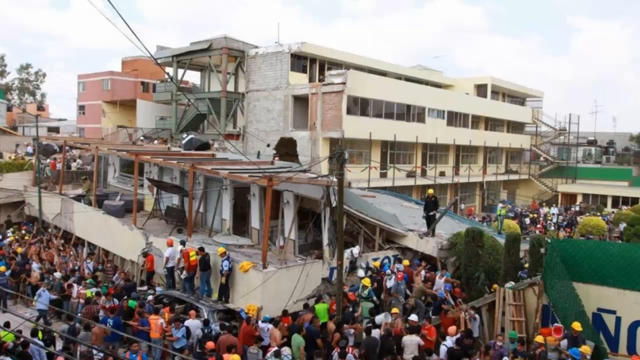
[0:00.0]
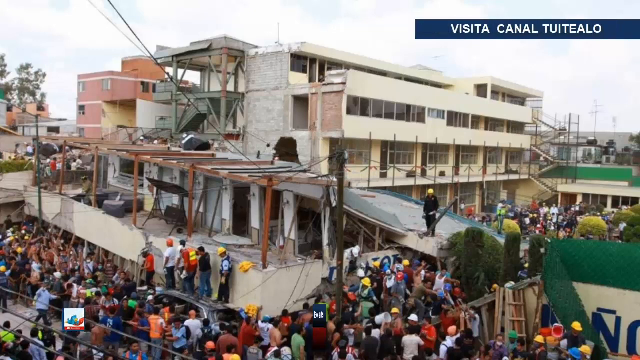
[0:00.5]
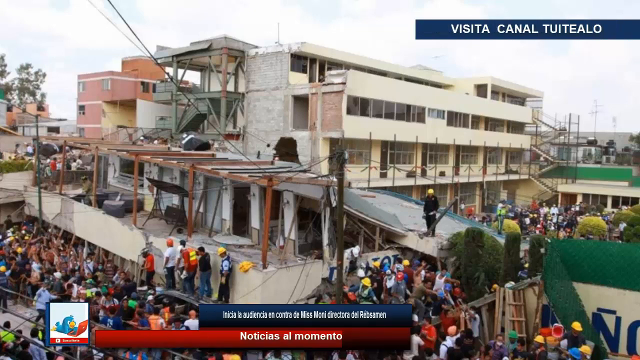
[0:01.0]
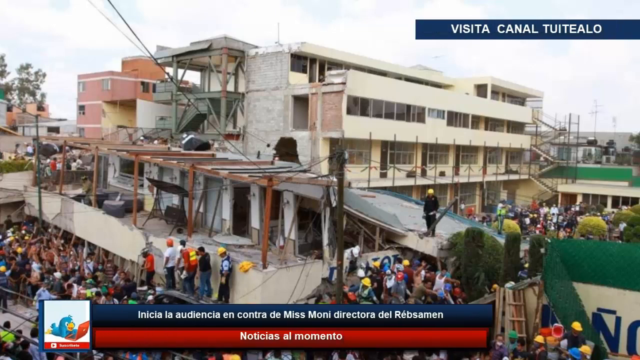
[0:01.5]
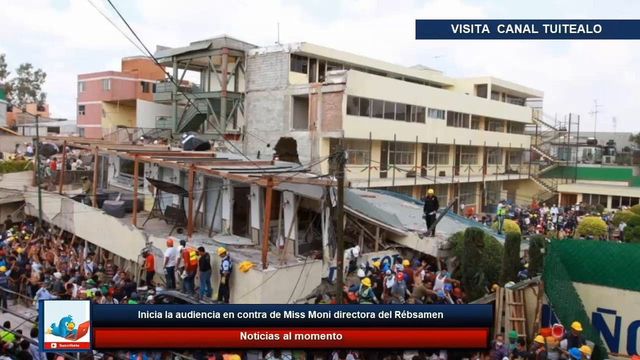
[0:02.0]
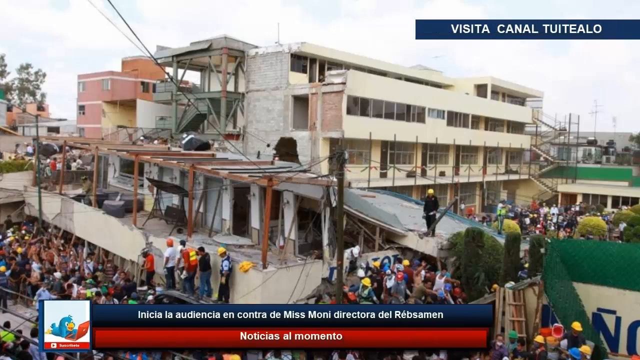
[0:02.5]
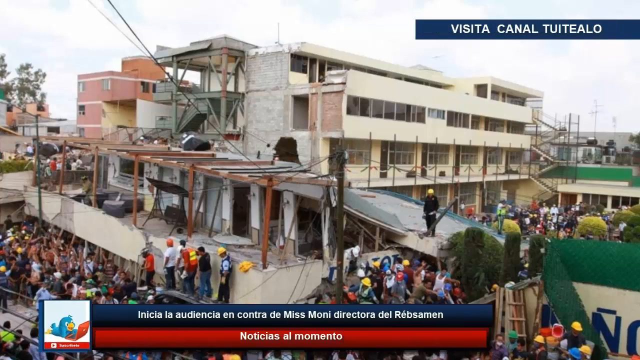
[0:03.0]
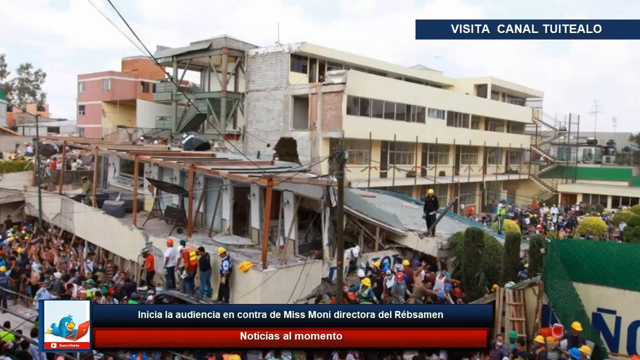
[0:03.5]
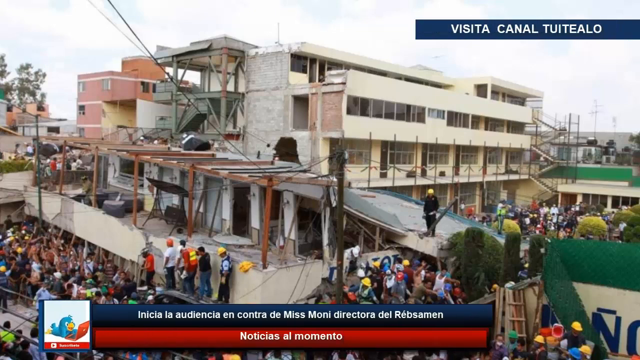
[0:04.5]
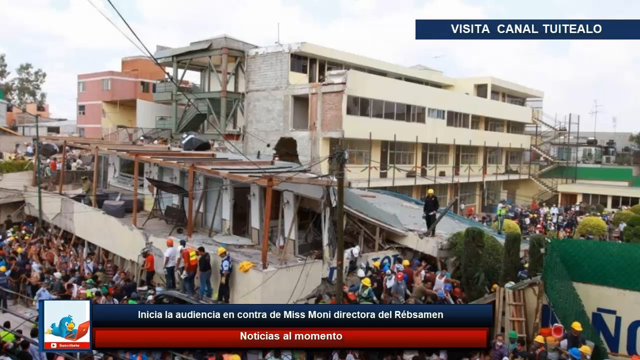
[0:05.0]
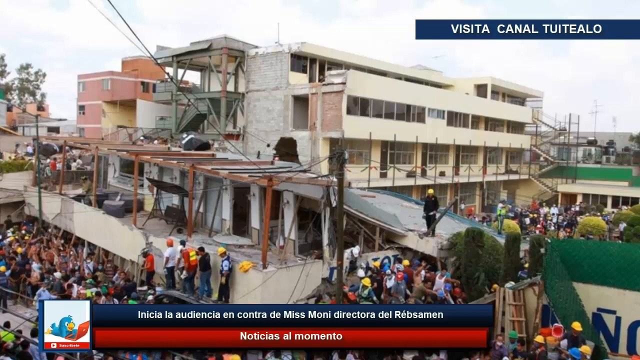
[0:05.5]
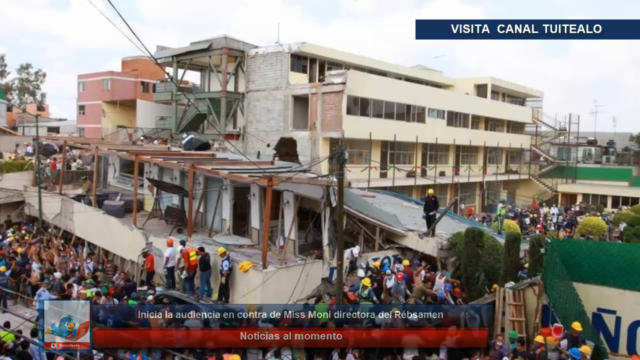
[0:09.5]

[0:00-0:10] A building is surrounded by hundreds of people, so many that they cover all visible sides of the building. Some of them wear yellow and orange construction vests, and the majority of the crowd wears yellow construction hats. Some individuals are standing atop a car. The front part of the building appears dilapidated, while the others behind it appear to be usable. One of the buildings is painted orange, while the other is a light yellow and has a staircase.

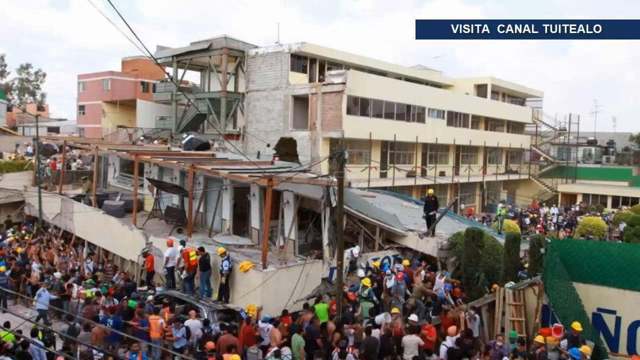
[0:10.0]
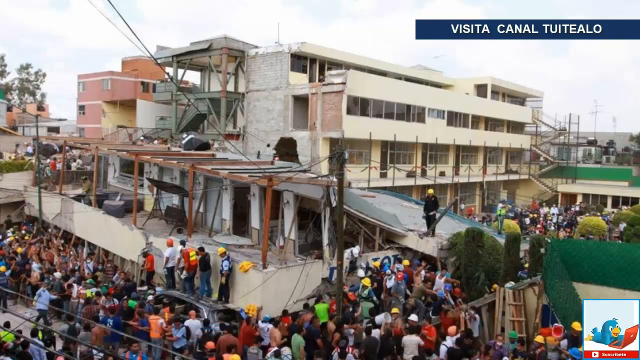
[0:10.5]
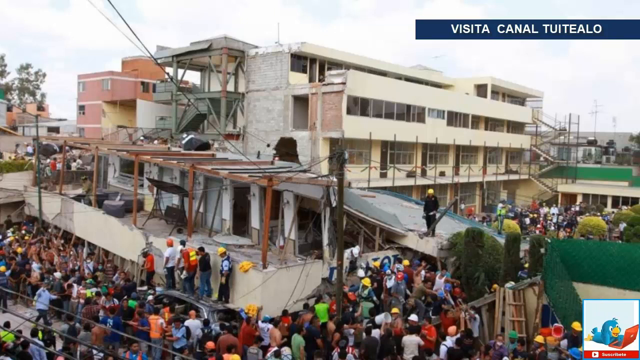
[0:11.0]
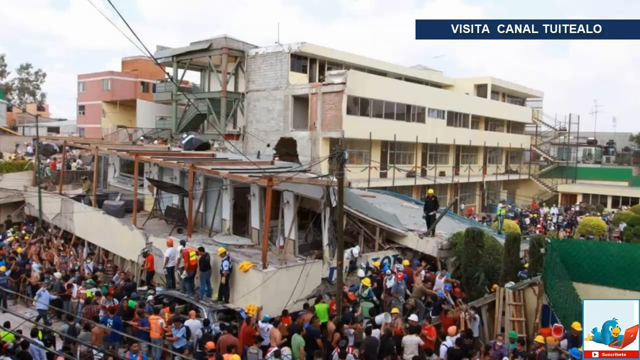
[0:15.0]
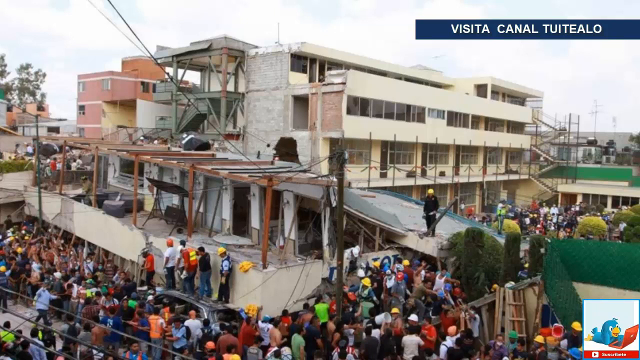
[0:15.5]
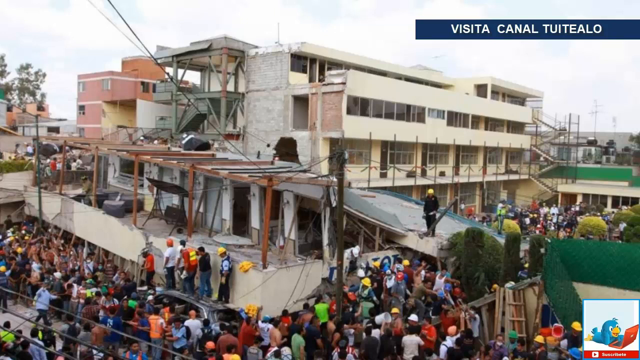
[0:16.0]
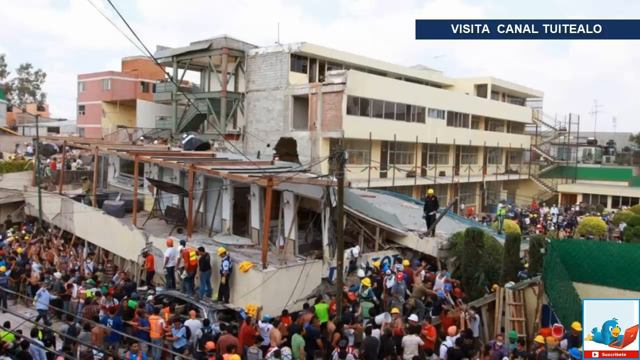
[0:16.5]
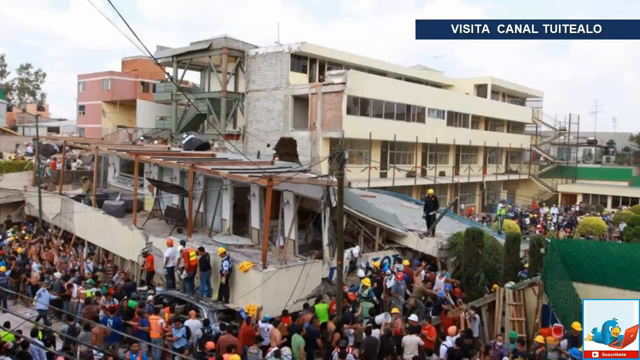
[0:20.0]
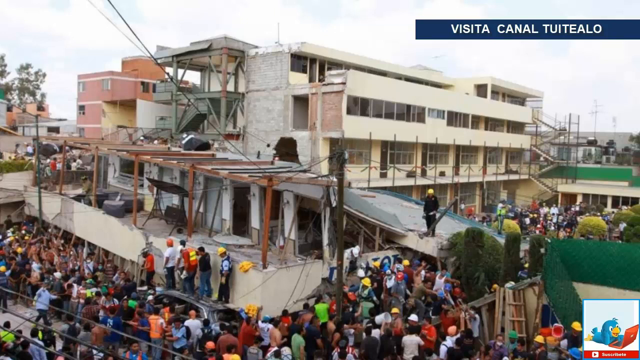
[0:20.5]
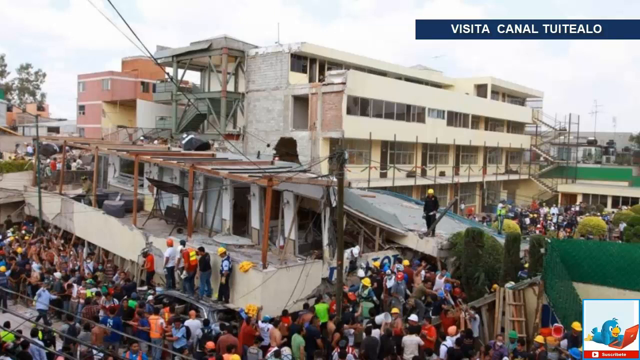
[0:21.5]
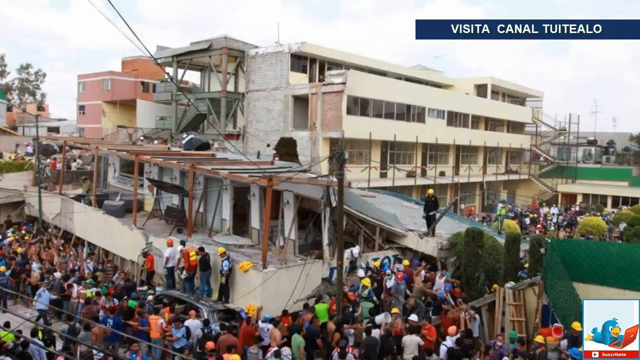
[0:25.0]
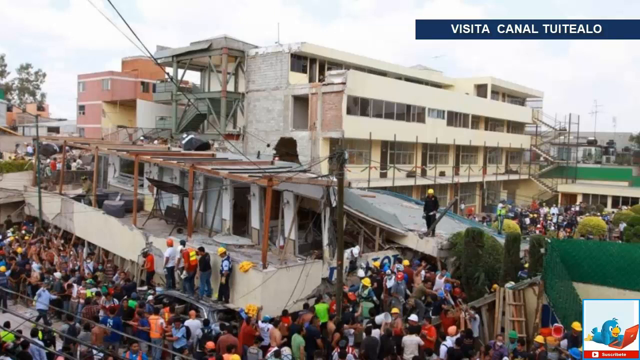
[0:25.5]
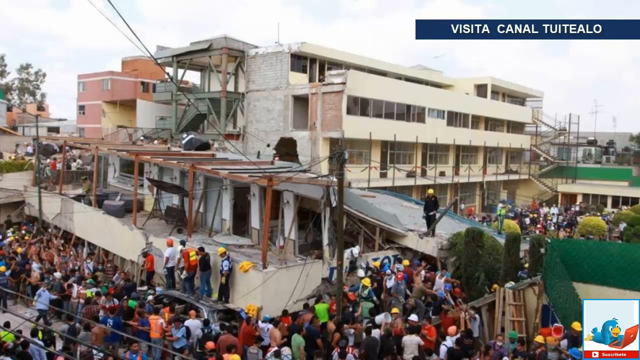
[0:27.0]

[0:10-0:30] A building is surrounded by a crowd of hundreds of people who cover all visible sides. People in the crowd wear yellow construction hats and orange vests. Part of the building appears dilapidated, while the others behind it appear to be in use. One of the buildings is orange and the other is a light yellow. A man dressed in a black work suit with an orange and yellowish construction hat is standing atop one of the structures. Electricity wires hang from a pole, stretching to different sides. At the top right of the screen is a caption in white text on a blue background that begins "Visit our channel". To the right of the screen is a green fence. The sky is clear, with a few white clouds visible.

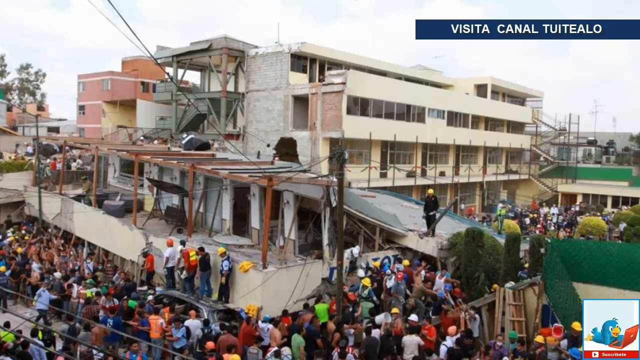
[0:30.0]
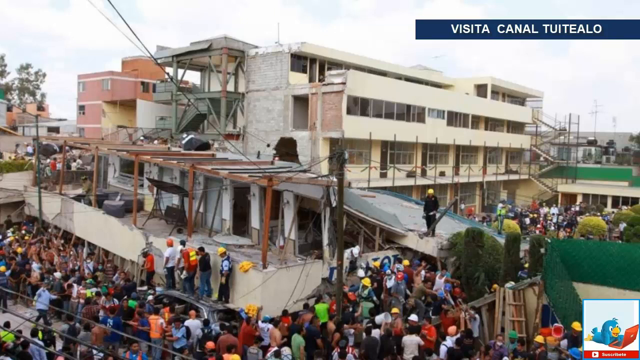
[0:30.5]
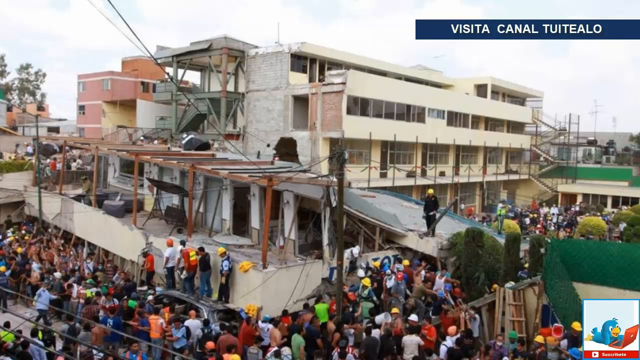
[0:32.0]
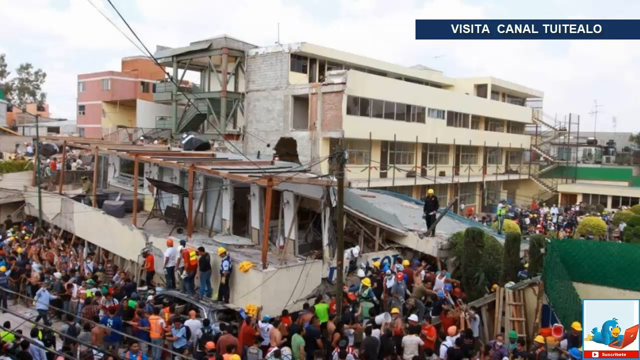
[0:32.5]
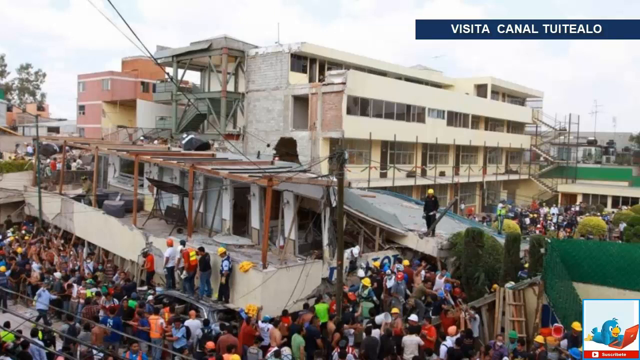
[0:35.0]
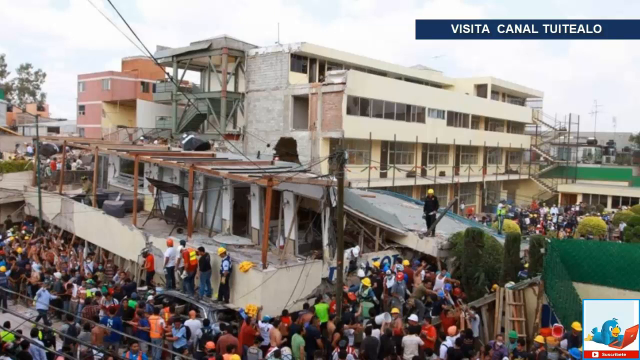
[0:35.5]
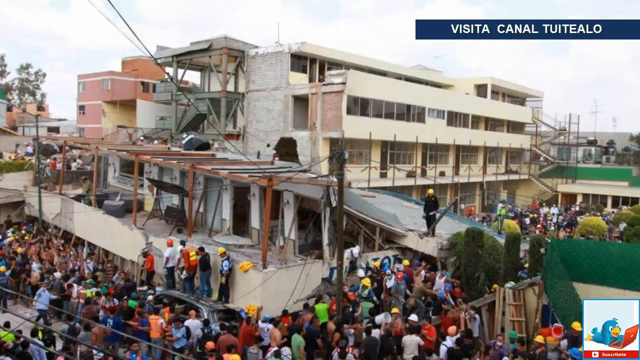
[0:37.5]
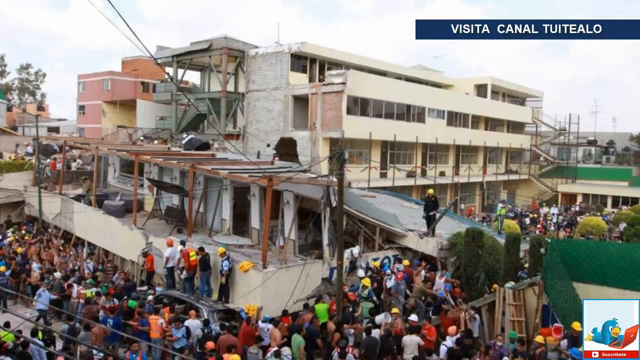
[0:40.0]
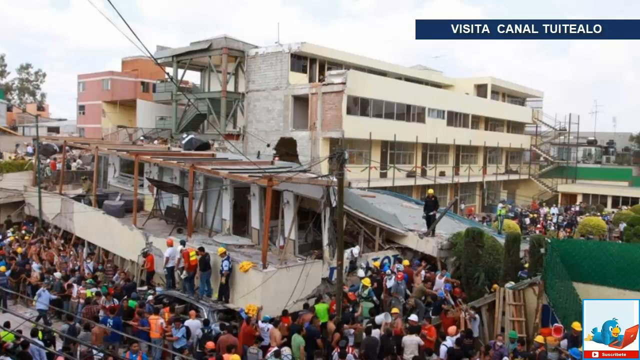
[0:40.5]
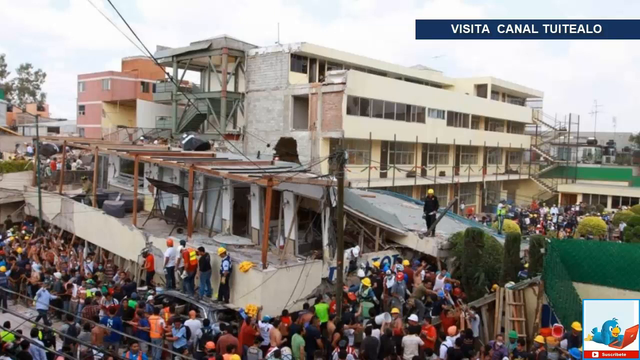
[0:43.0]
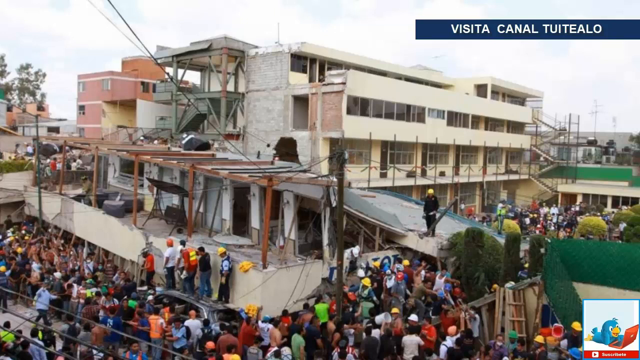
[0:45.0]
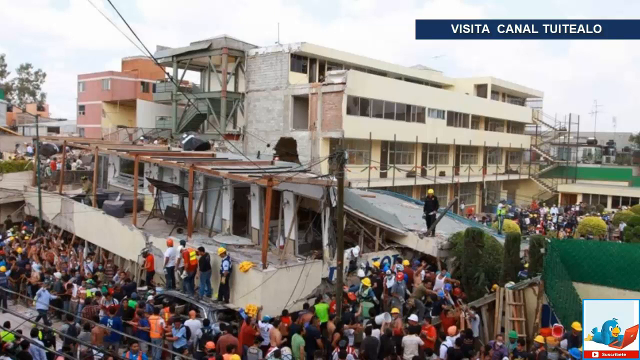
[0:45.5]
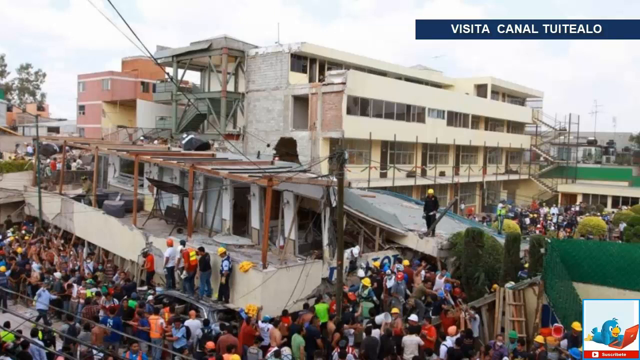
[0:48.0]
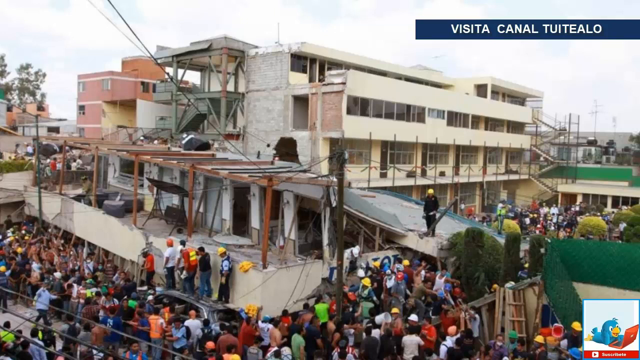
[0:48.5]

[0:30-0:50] A dilapidated structure is surrounded on all sides by a crowd of people. A few individuals are standing atop the structure, one of them wearing a black work suit with a yellow construction hat. Members of the crowd wear yellow construction hats and orange construction vests. A few individuals are standing atop a black car. One of the buildings appears to have a massive hole in its side, and part of the building appears to have collapsed. An electricity pole has wires stretching across to different sides. Behind the collapsed structure is a building painted orange. The light yellow building has a metal staircase on its far end. The sky is clear blue with white clouds, and it appears to be sunny. The people do not move. Patches of greenery and shrubbery are scattered across the ground.